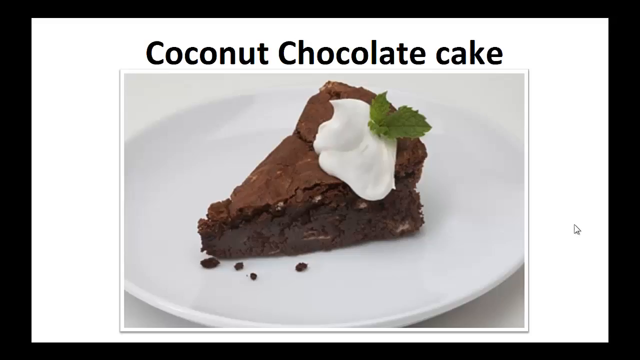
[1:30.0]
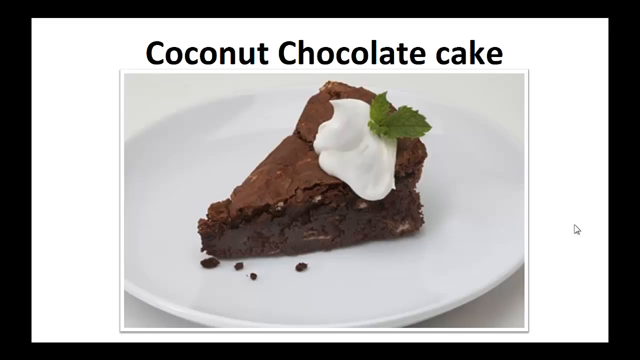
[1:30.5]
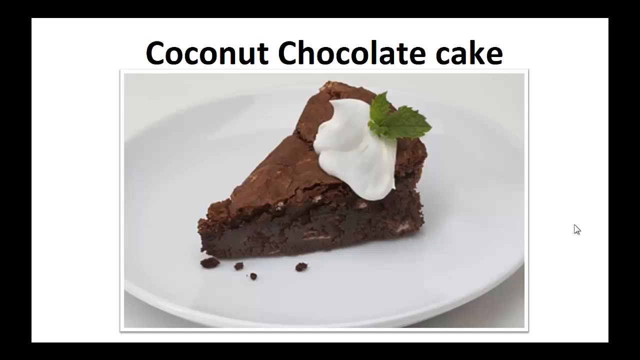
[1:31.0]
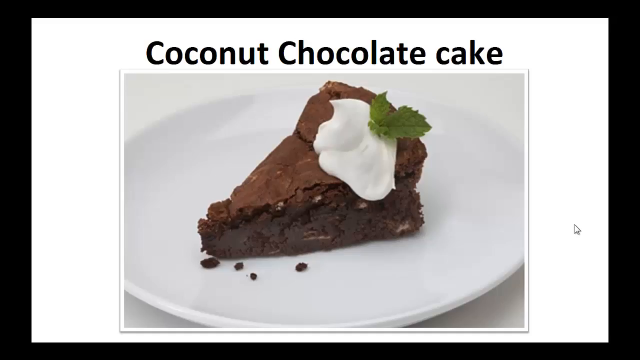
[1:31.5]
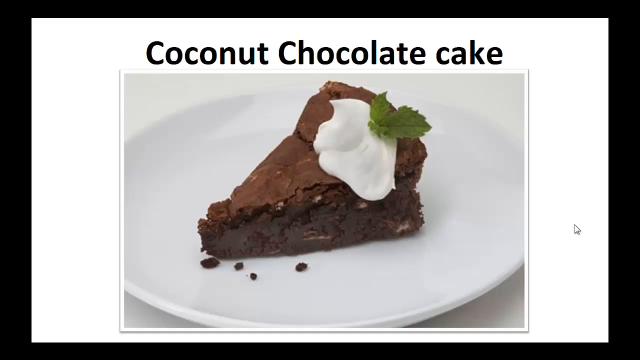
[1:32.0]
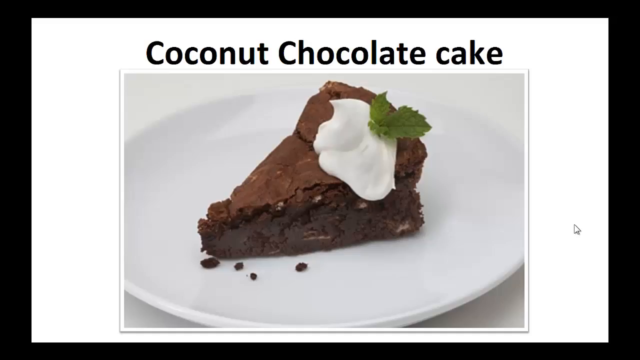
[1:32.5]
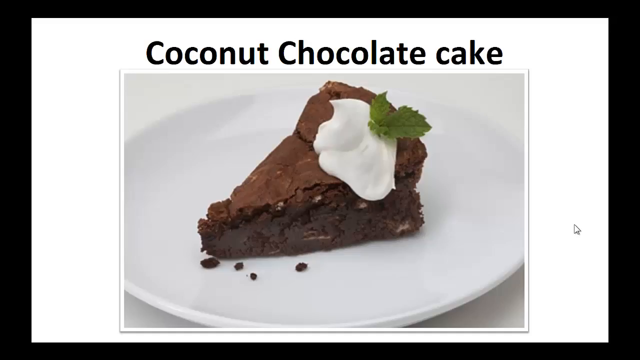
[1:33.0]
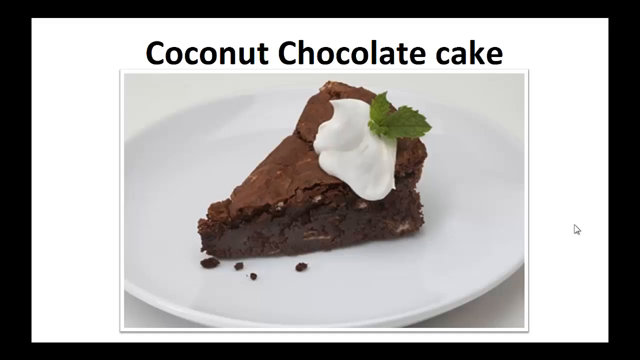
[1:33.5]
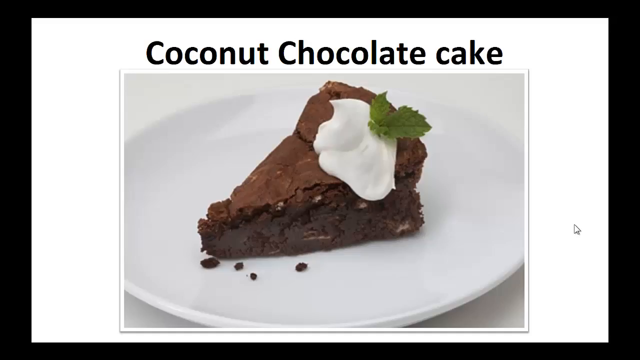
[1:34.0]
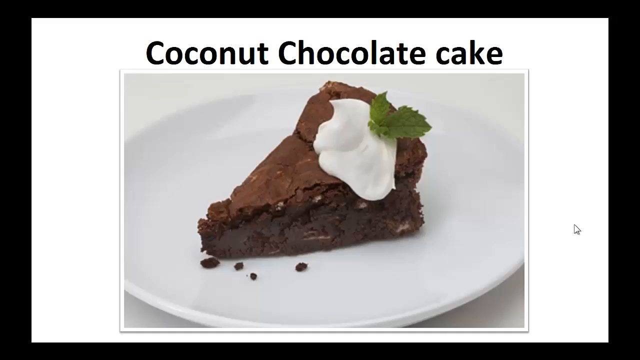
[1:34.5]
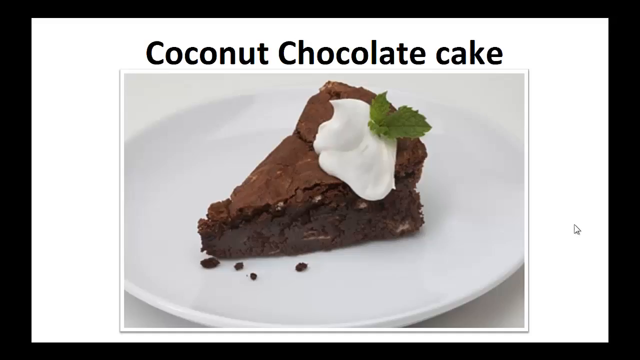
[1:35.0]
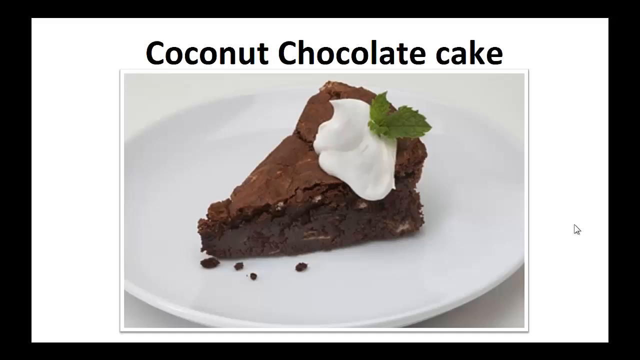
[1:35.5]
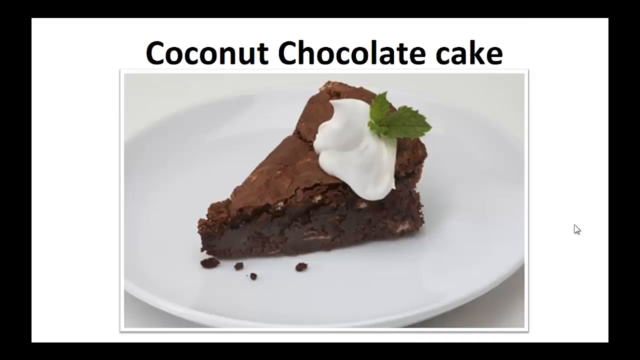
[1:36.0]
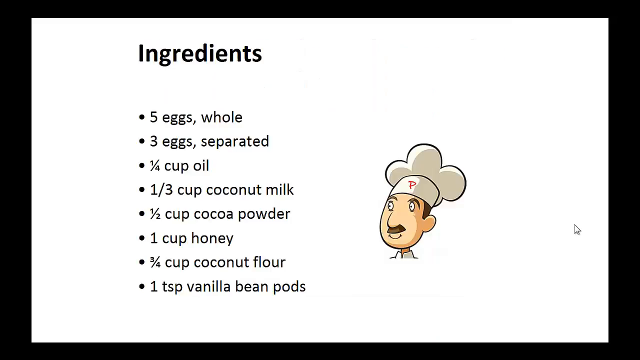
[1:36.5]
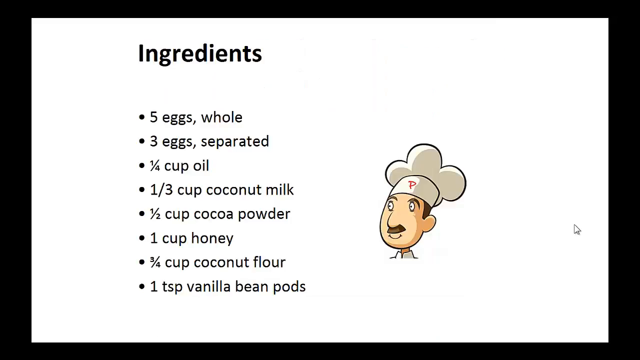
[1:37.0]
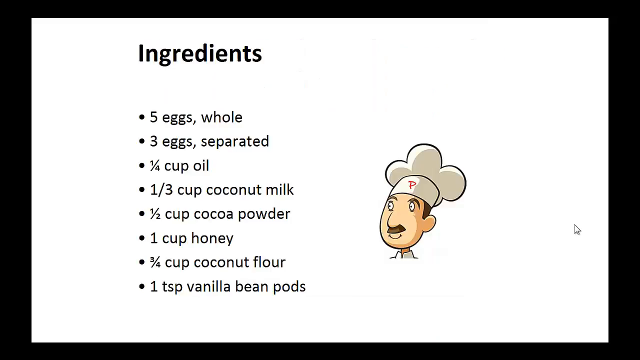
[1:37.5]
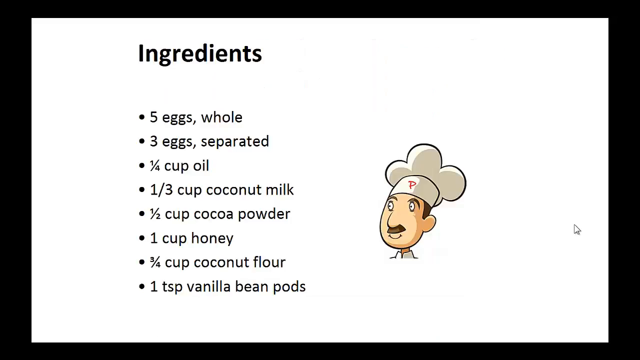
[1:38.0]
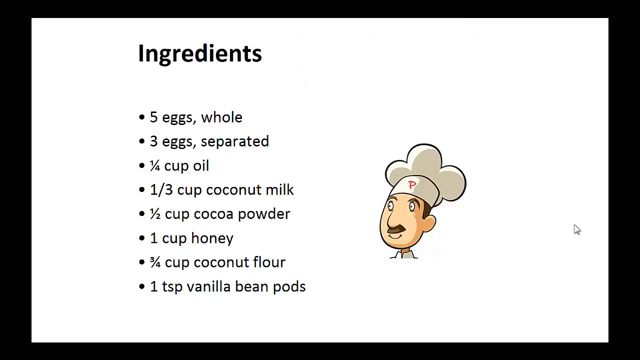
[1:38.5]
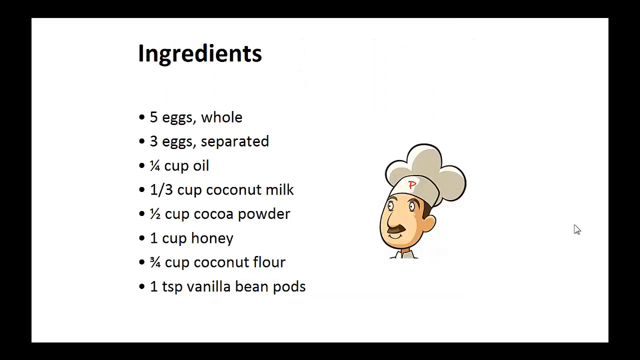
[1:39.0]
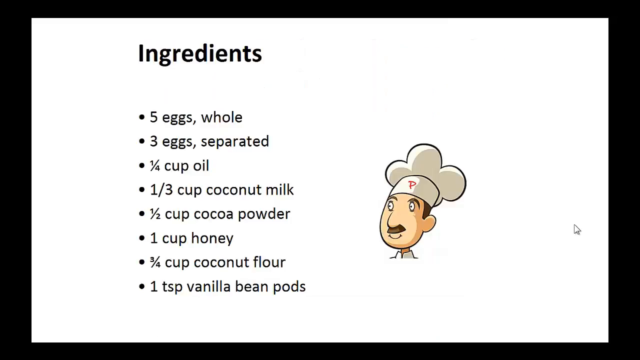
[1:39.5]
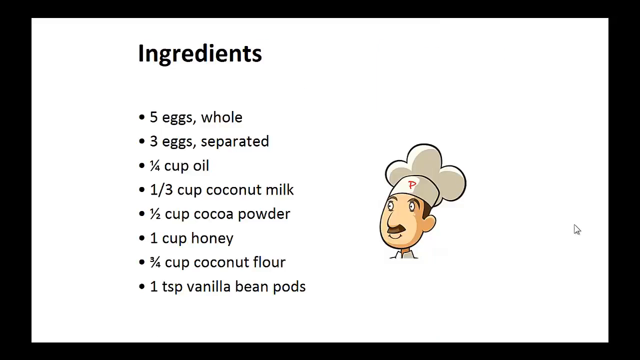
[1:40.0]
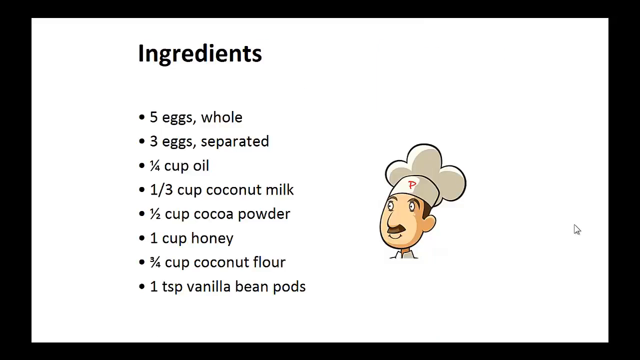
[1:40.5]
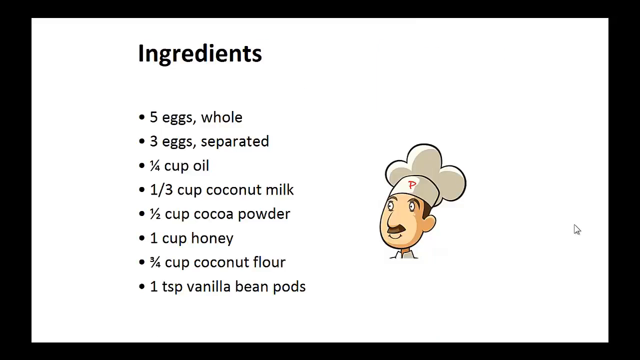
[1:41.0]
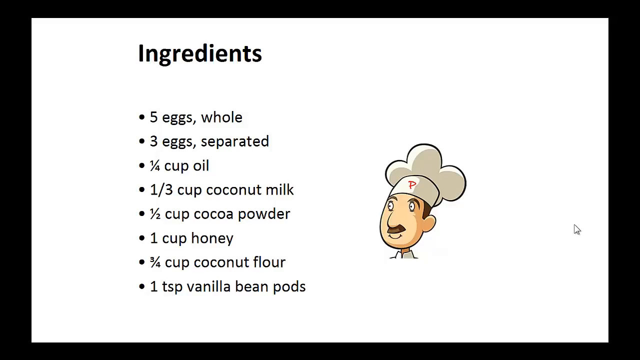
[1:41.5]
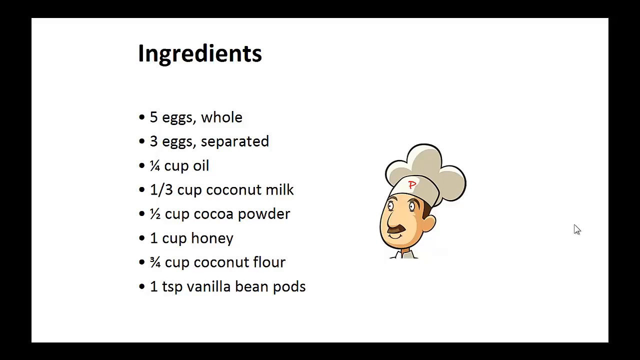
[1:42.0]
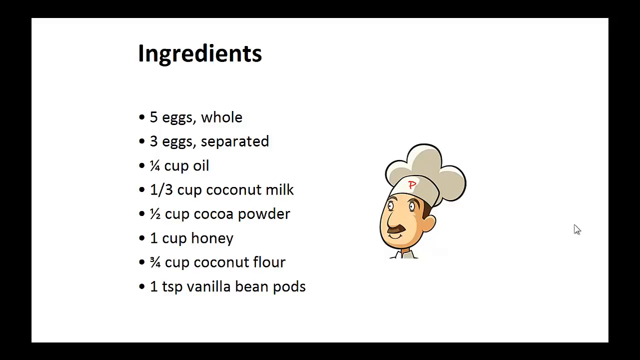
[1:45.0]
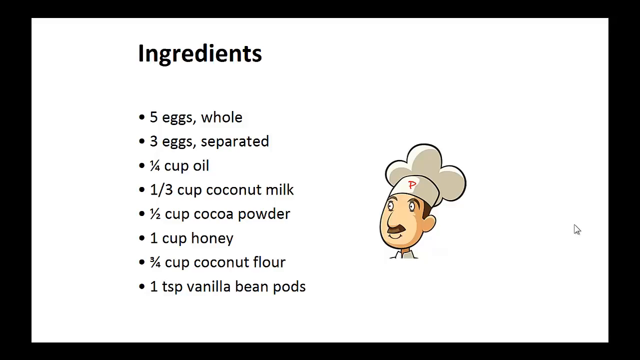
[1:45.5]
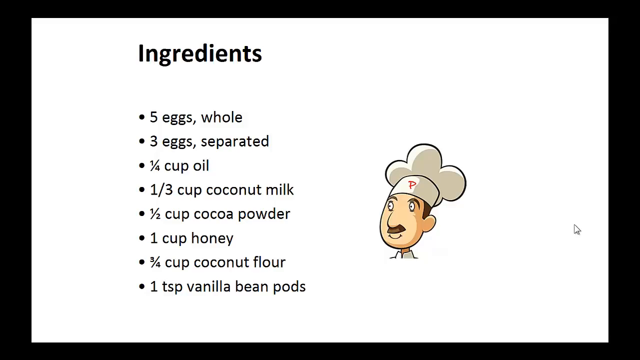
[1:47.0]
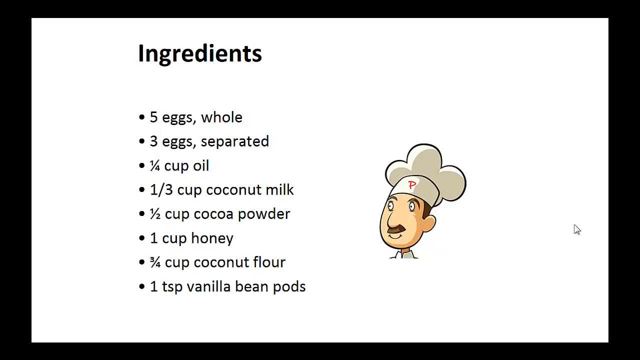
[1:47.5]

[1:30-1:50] At the top there is a plate holding a brown cake with white cream and leaves, apparently mint. Above it, "coconut chocolate cake" is written on the white background. The video then moves on to an ingredients list, apparently of eight ingredients, along with a cartoon picture that seems to symbolize a chef. The ingredients pass by quickly.